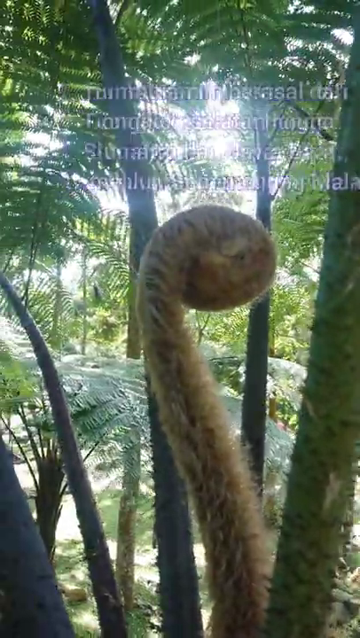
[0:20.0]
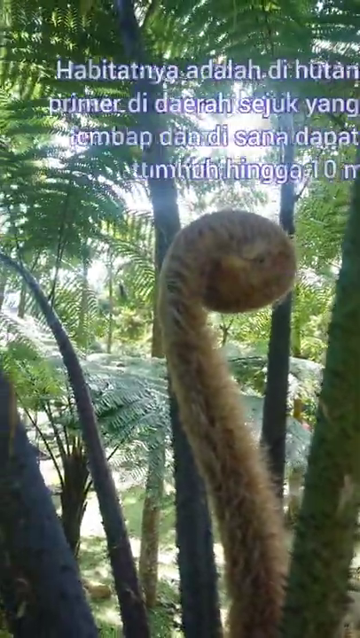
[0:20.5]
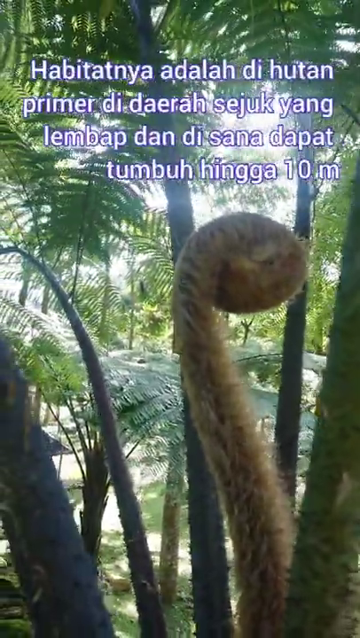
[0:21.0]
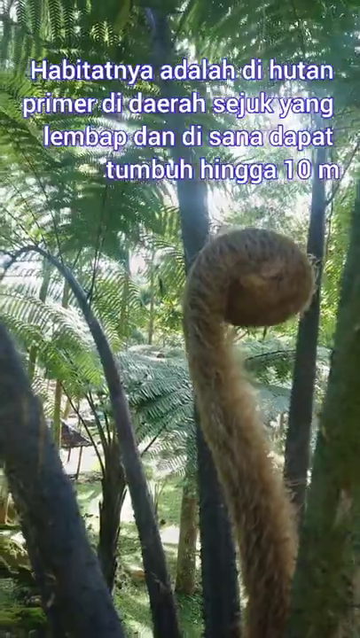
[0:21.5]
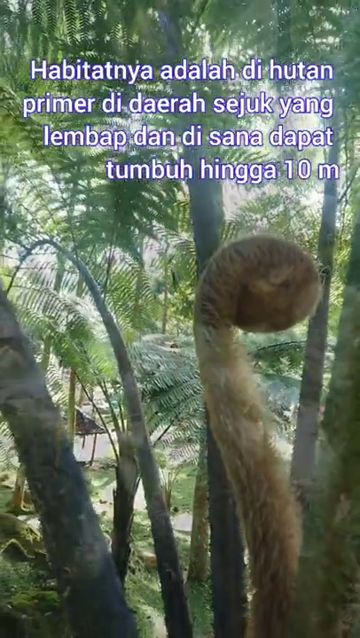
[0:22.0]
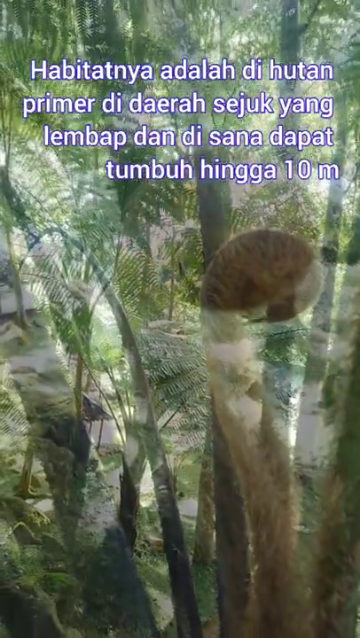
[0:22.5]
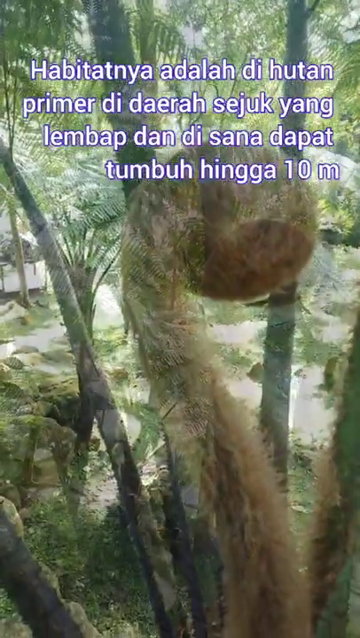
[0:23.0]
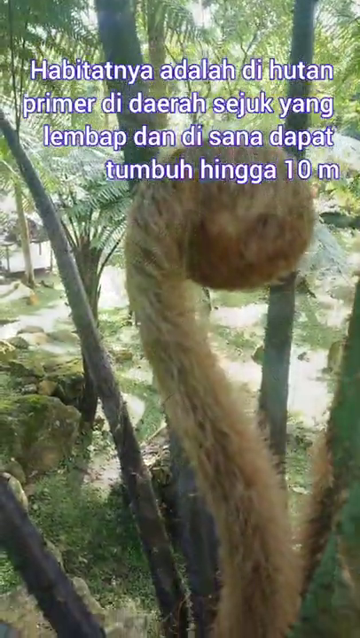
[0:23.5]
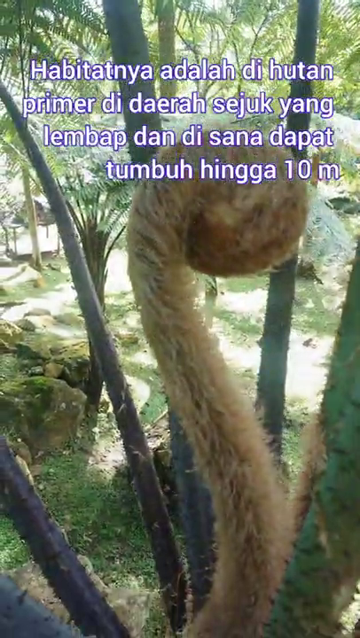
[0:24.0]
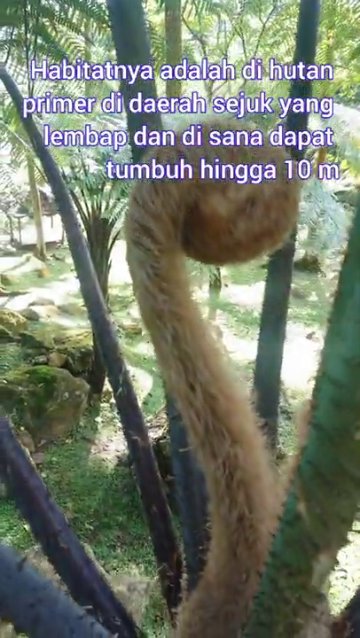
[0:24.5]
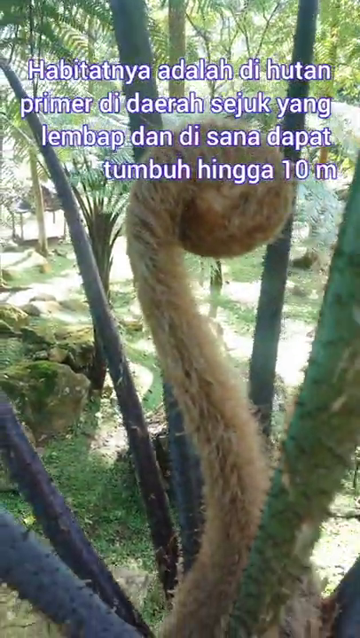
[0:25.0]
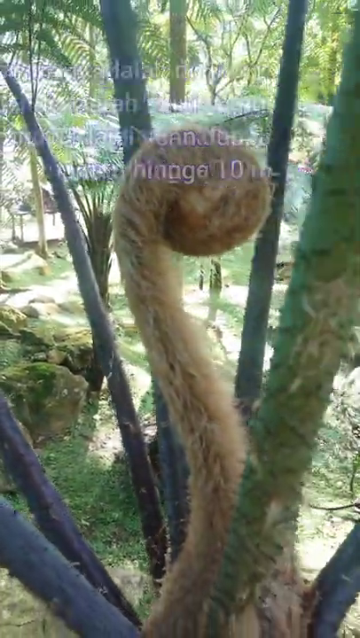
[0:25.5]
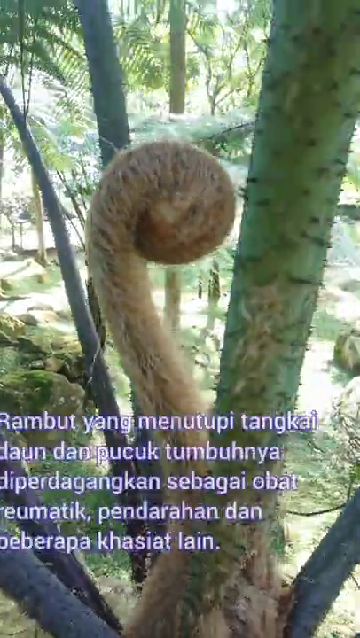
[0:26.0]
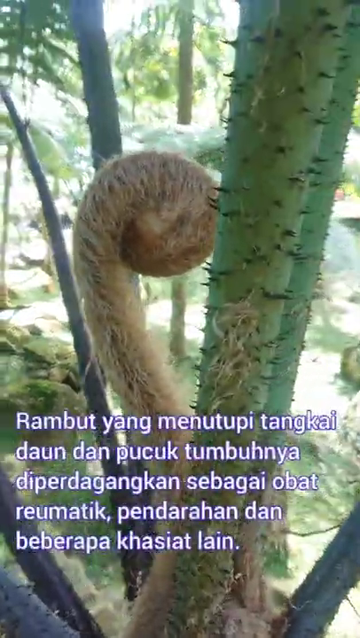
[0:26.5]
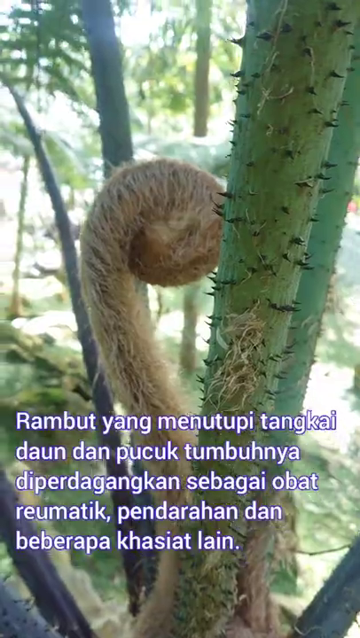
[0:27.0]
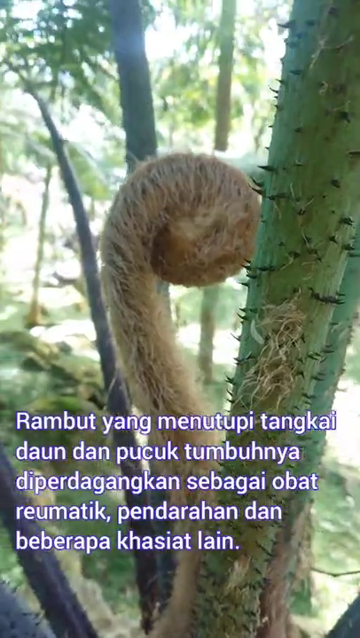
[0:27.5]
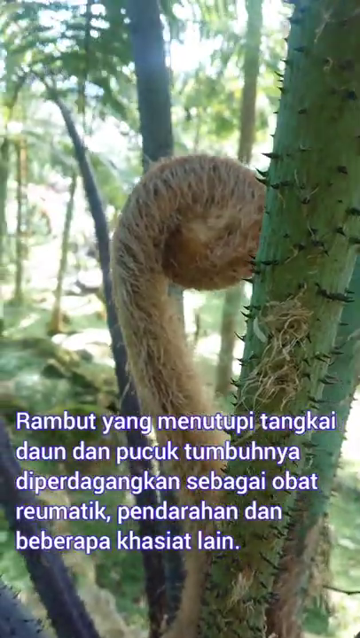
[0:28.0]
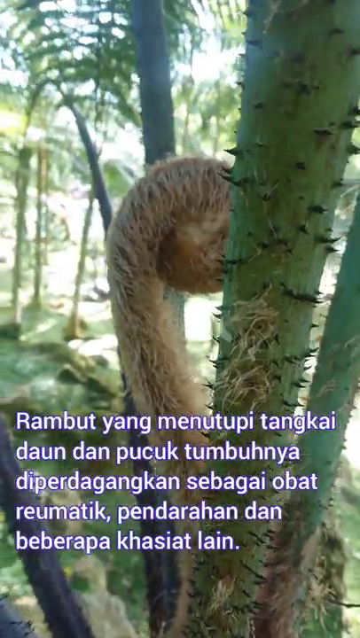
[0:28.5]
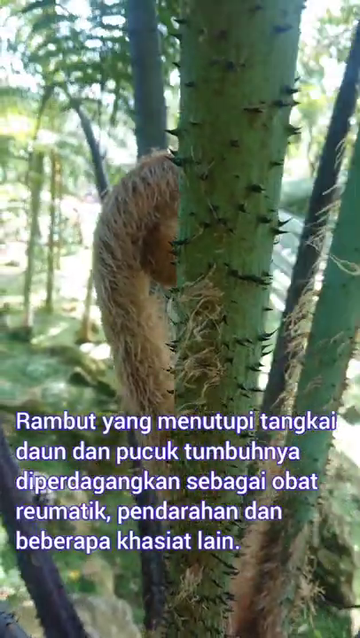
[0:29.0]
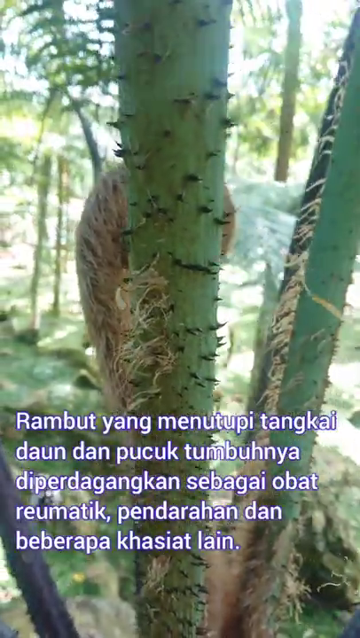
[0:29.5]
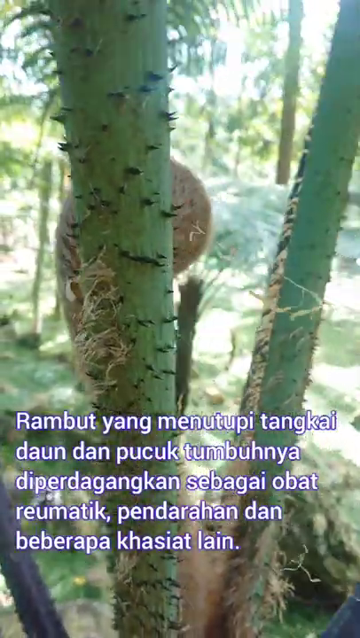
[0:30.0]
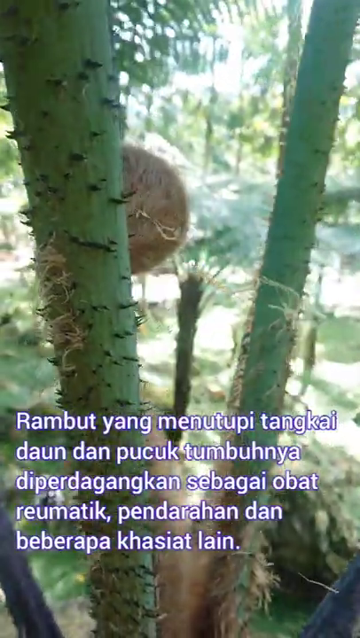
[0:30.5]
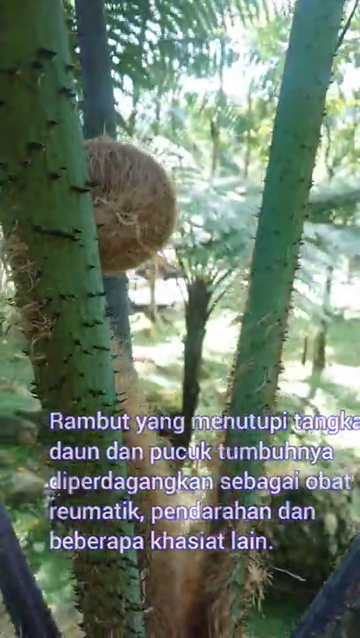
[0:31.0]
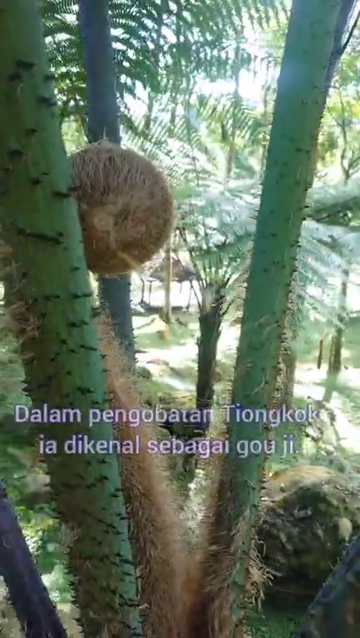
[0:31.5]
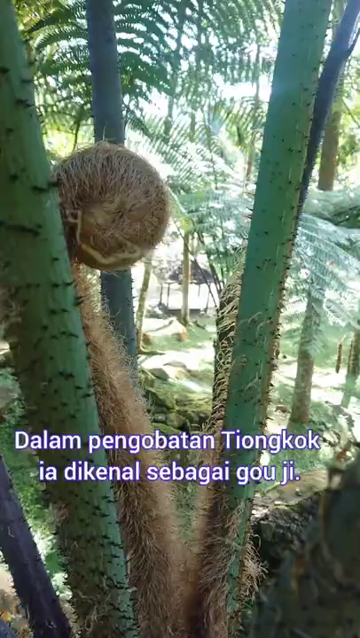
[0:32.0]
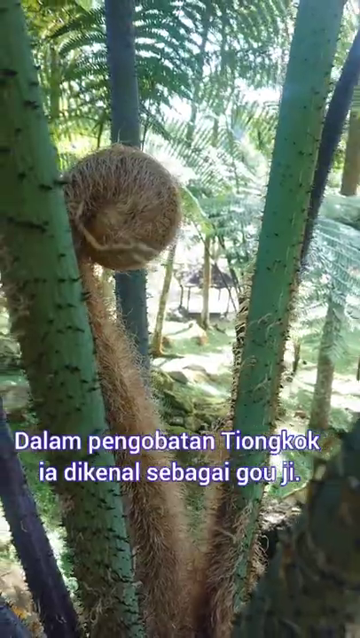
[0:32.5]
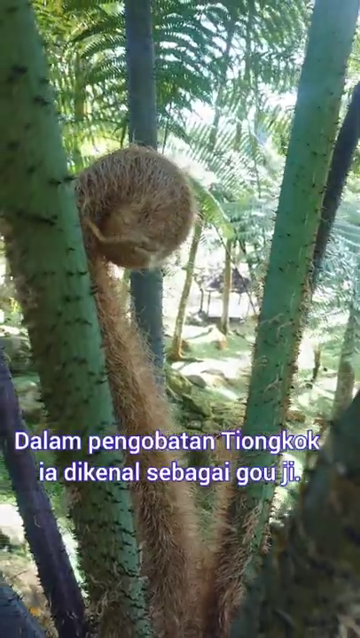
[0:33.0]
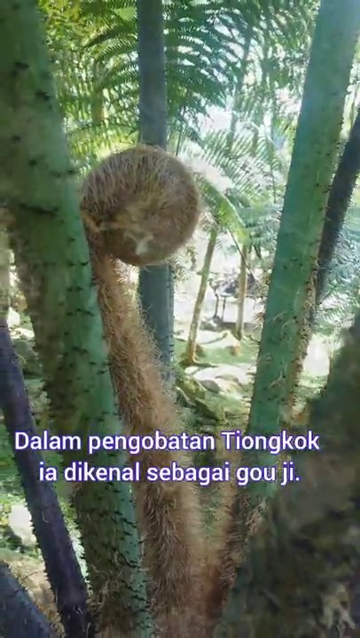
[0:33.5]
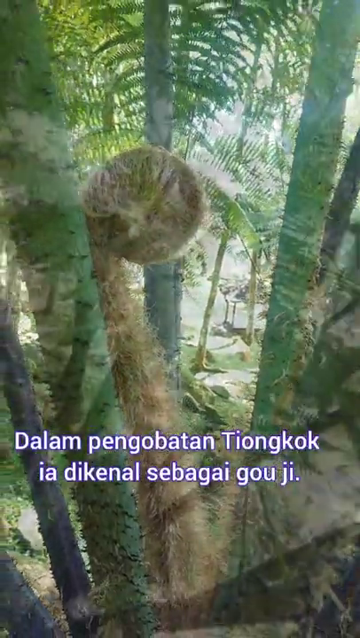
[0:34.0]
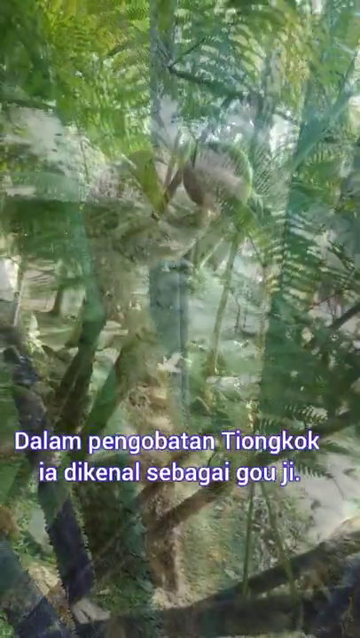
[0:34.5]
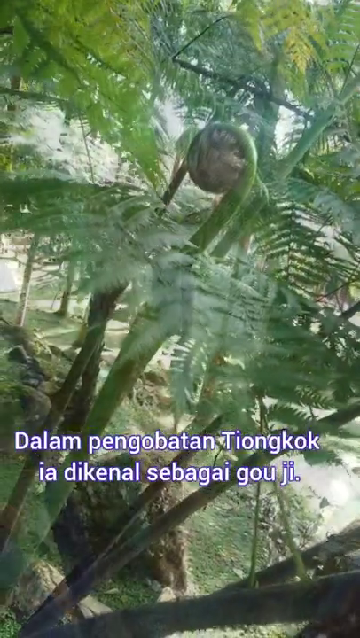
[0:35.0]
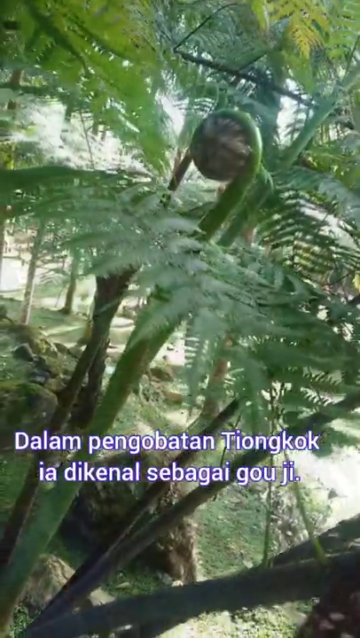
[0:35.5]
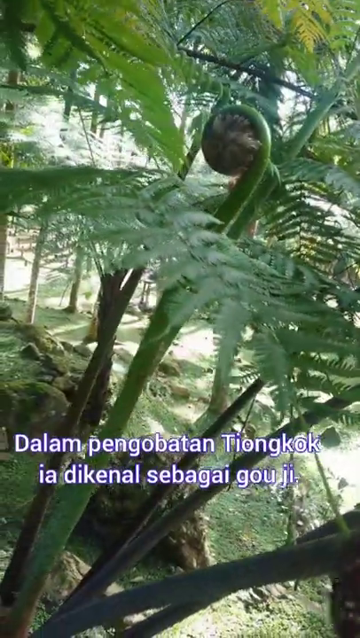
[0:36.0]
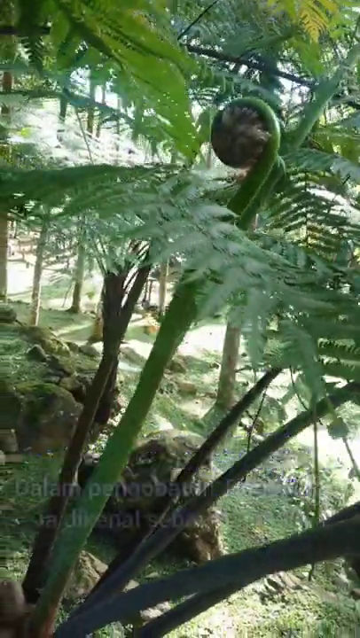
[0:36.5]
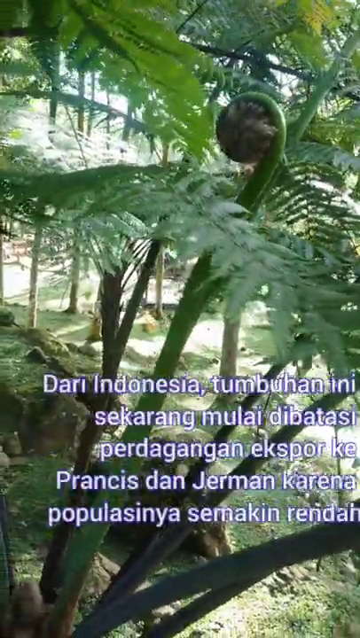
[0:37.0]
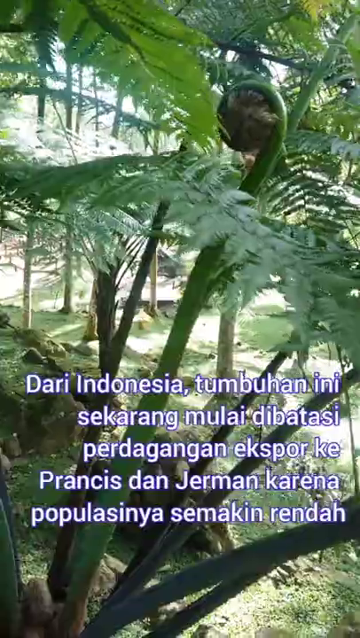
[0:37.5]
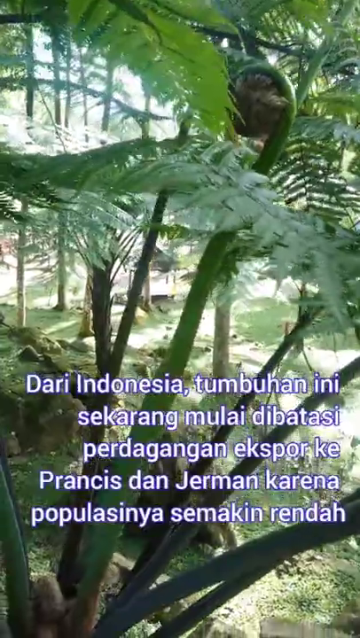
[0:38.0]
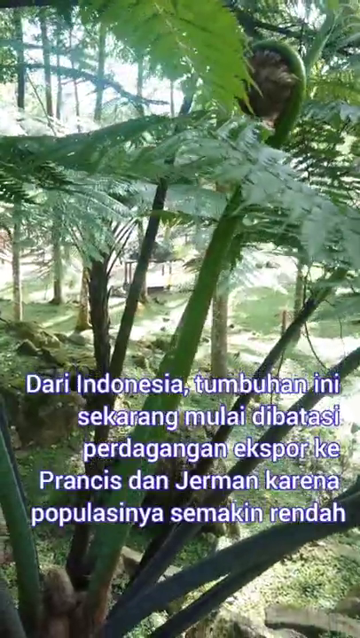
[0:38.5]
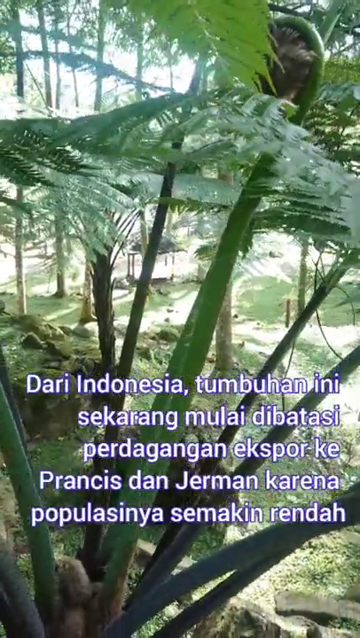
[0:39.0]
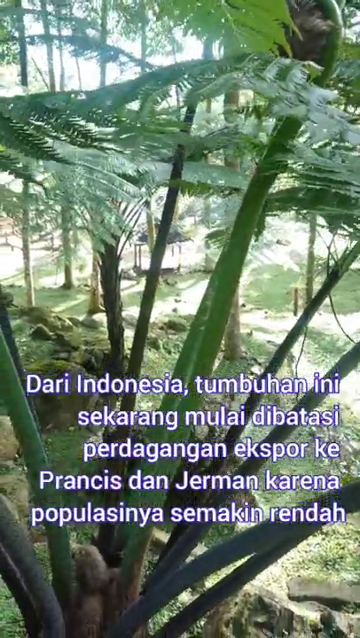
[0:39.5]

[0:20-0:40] The view continues through the jungle as more text comes up, beginning "Habitatnya". Individual ferns are shown one after another while further text appears, one passage beginning "Rambut Yang", the next beginning "Dalam", and another beginning "Dari Indonesia". The text is possibly in Malay. The whole time, the camera stays on what appear to be giant ferns in the jungle, which provide a lot of shade from the intense sunshine.